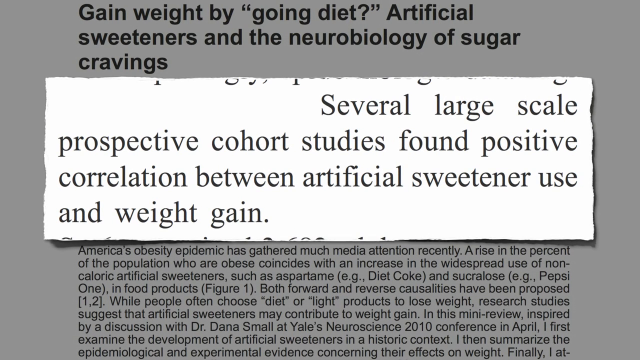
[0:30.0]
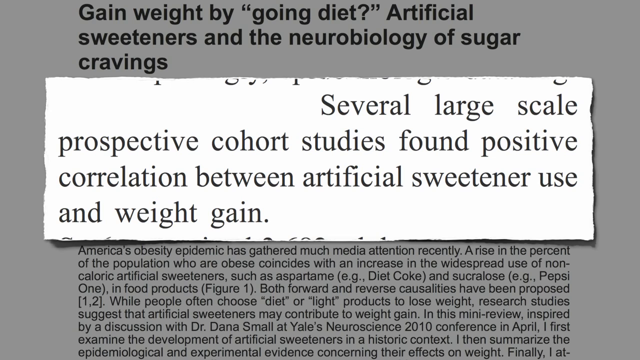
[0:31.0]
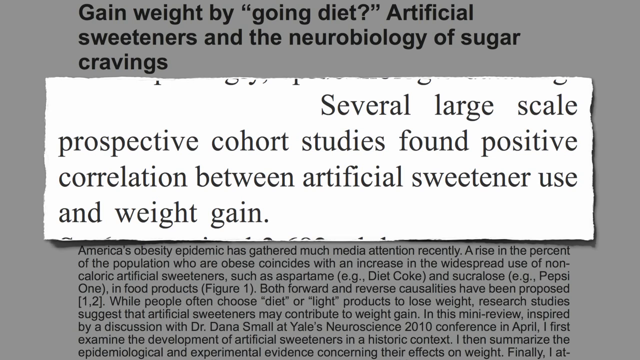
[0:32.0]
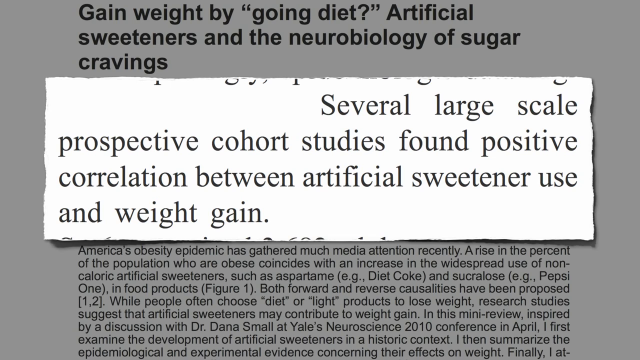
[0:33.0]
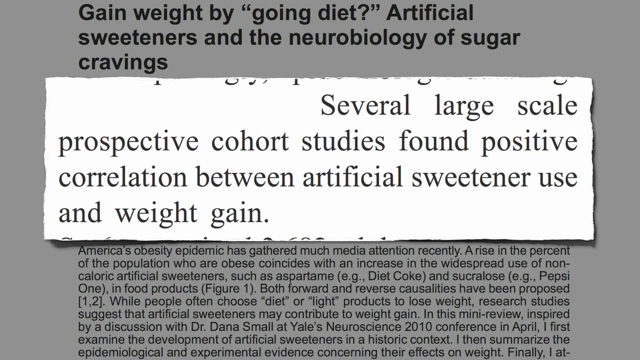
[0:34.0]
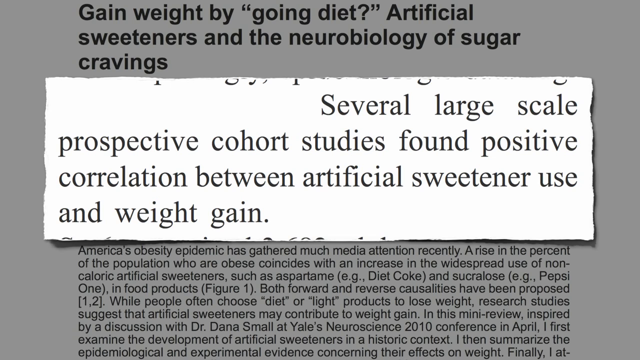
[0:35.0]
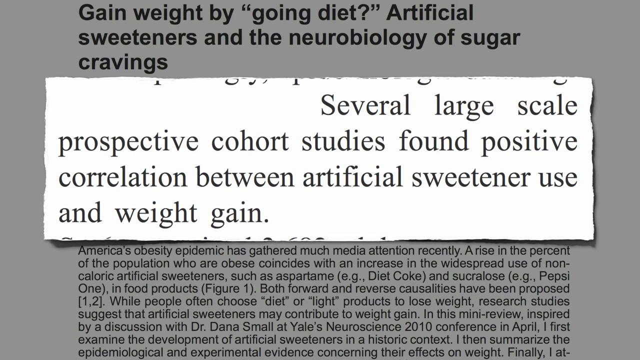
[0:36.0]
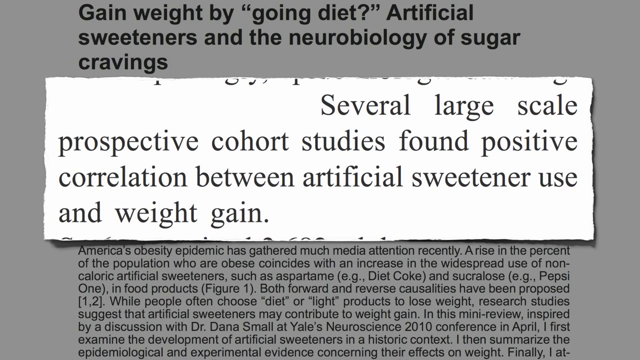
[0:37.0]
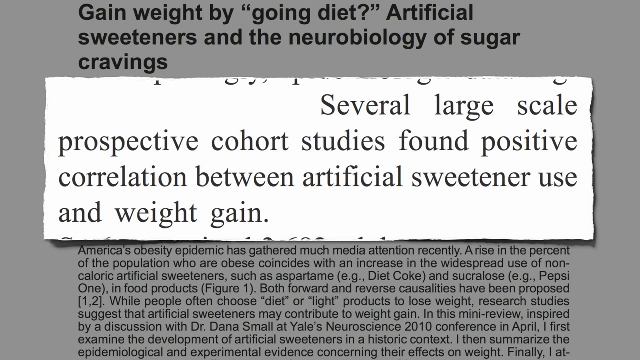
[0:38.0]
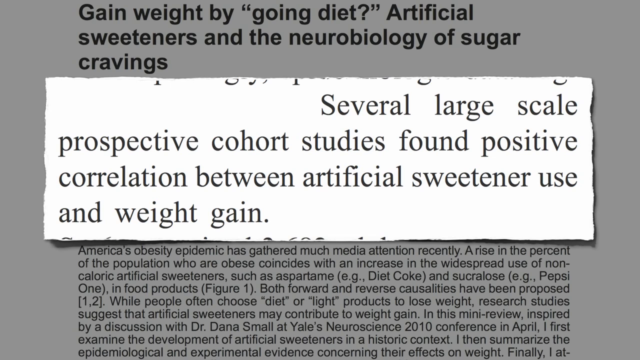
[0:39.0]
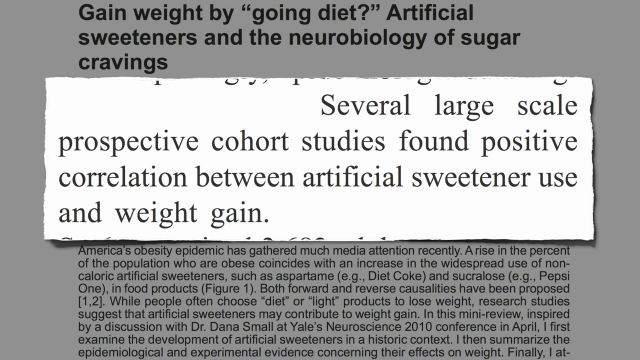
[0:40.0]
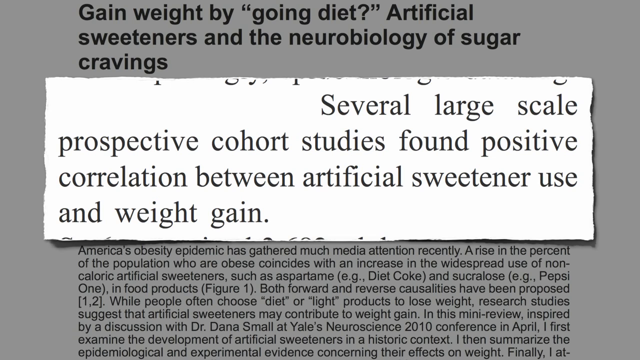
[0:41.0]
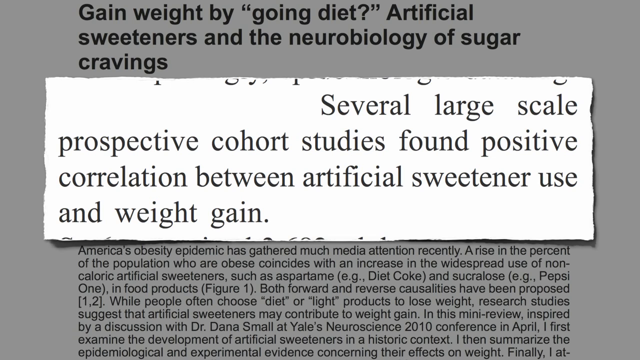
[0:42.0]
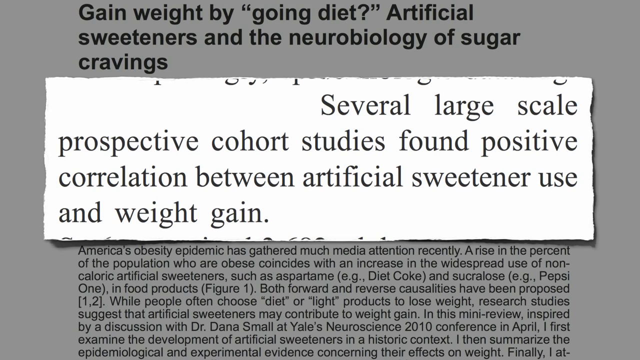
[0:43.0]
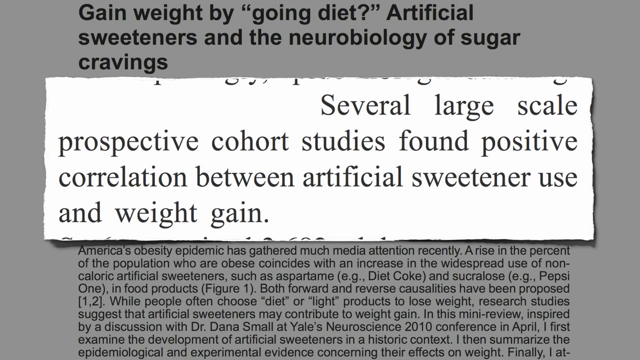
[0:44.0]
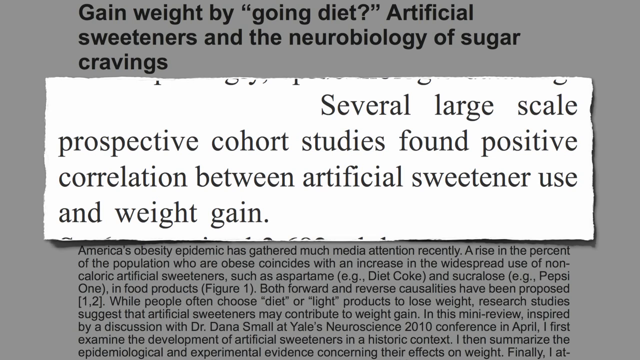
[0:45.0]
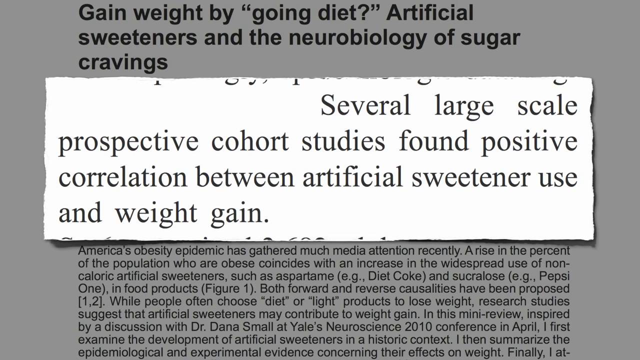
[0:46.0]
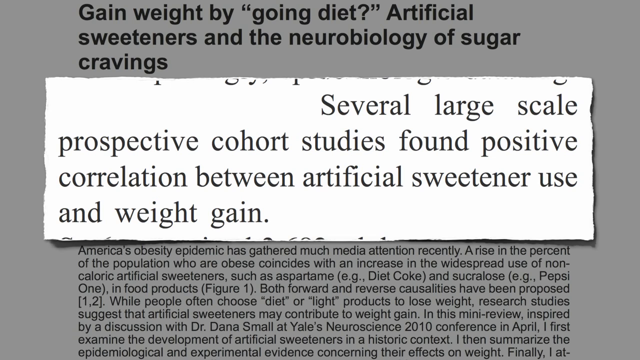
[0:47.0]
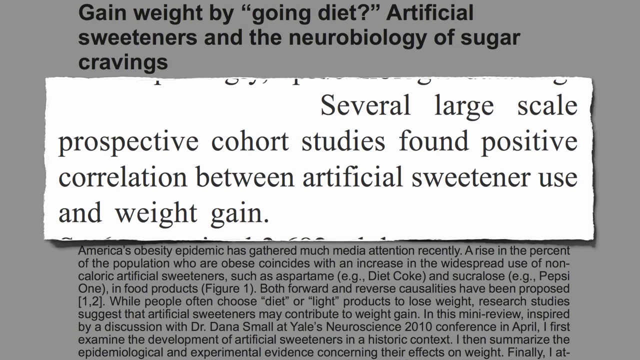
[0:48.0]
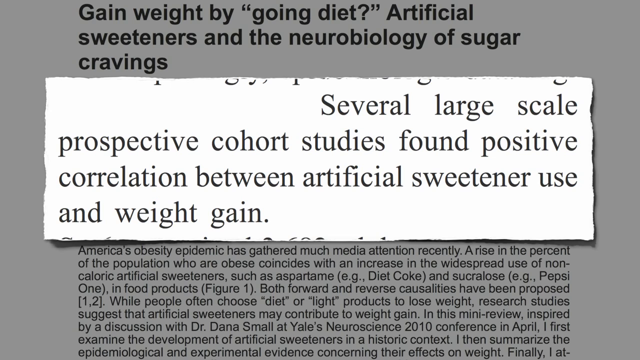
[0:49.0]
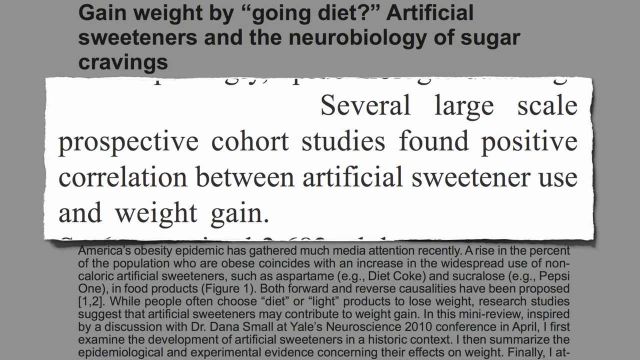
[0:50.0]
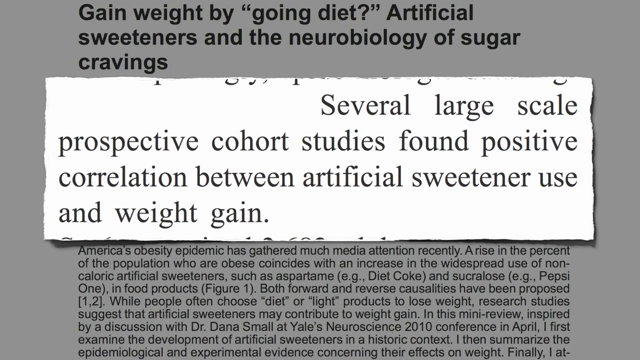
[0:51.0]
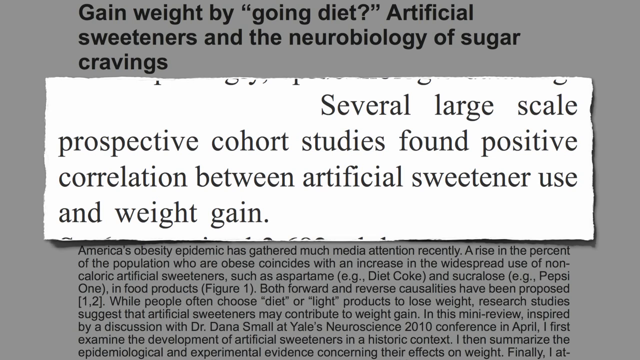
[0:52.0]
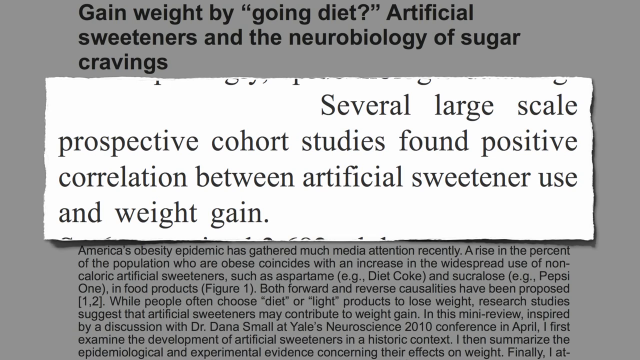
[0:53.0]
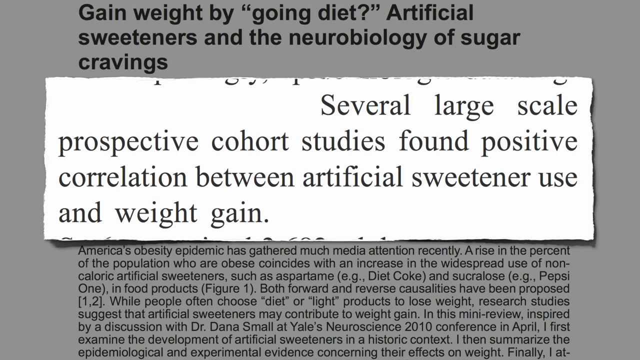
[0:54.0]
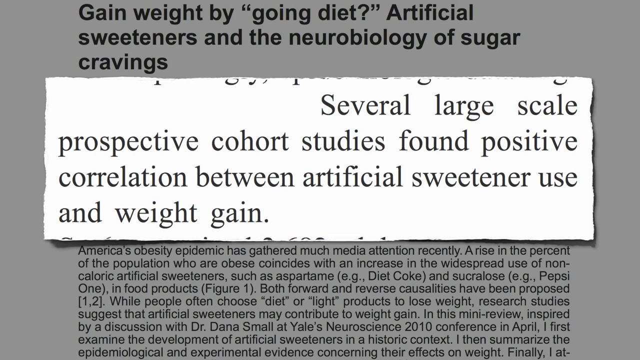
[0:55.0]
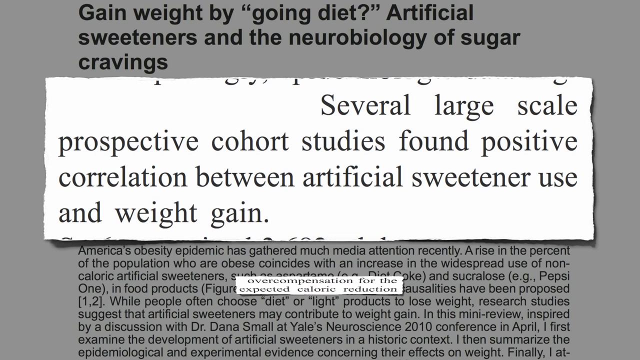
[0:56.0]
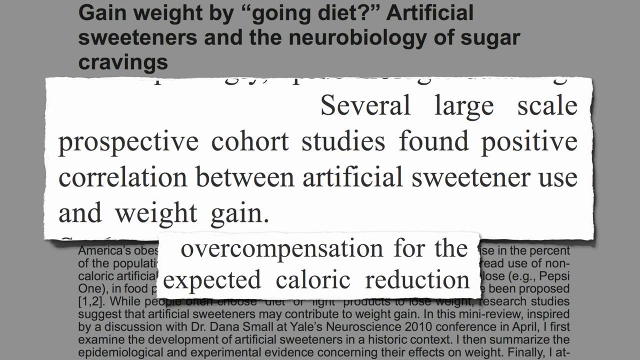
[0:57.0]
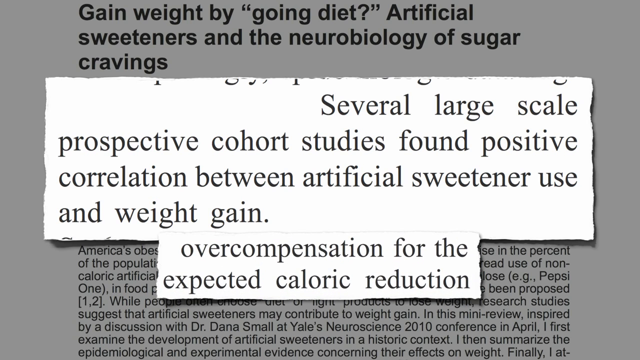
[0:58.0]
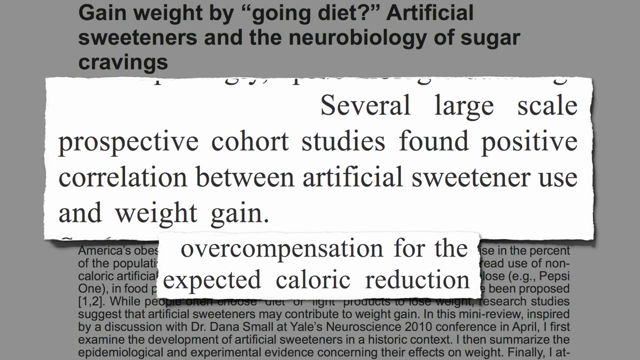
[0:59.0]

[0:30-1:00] More excerpts from the article about artificial sweeteners appear. The text states that a rise in the percent of the population who are obese coincides with the widespread use of non-caloric artificial sweeteners, such as aspartame in Diet Coke and sucralose in Pepsi One. It adds that artificial sweeteners are also found in food products and that both forward and reverse causalities have been proposed for this correlation. The article then describes one theory: that the use of artificial sweeteners prompts an overcompensation for the expected caloric reduction.